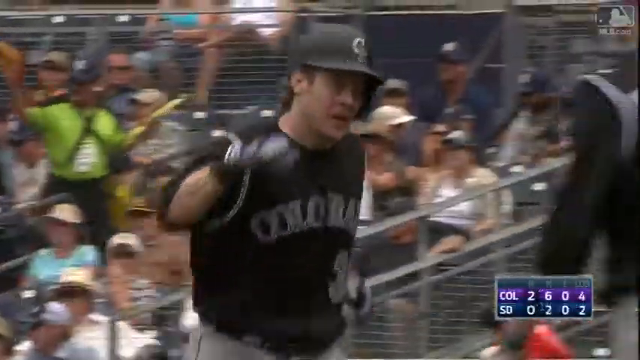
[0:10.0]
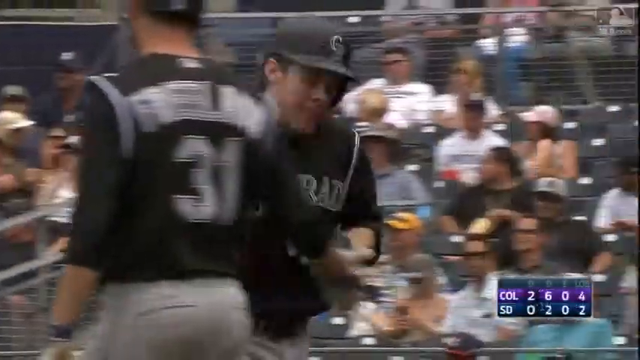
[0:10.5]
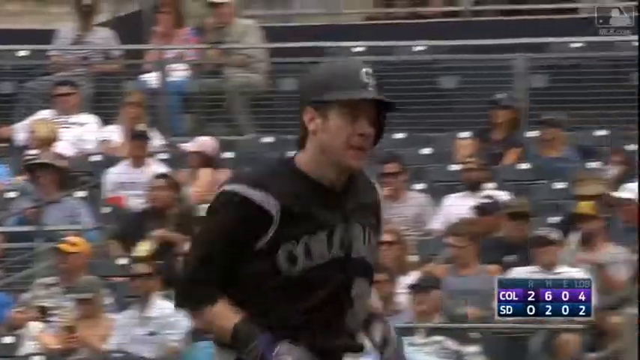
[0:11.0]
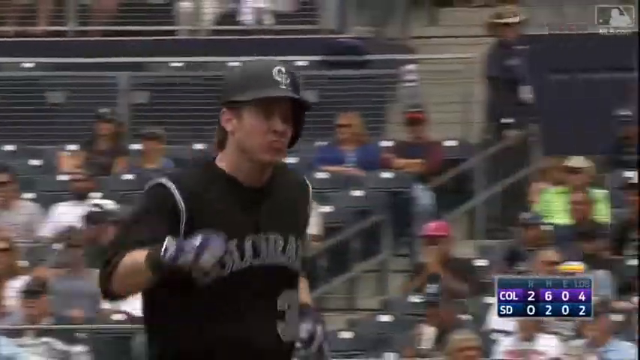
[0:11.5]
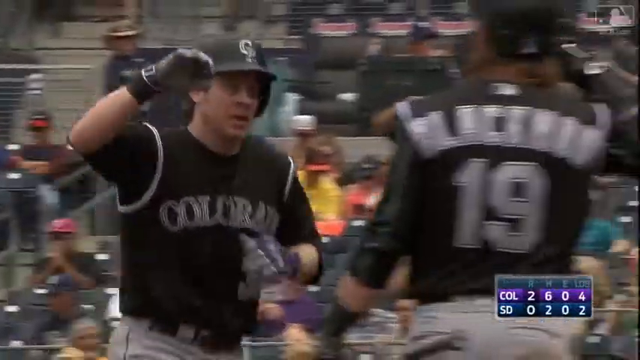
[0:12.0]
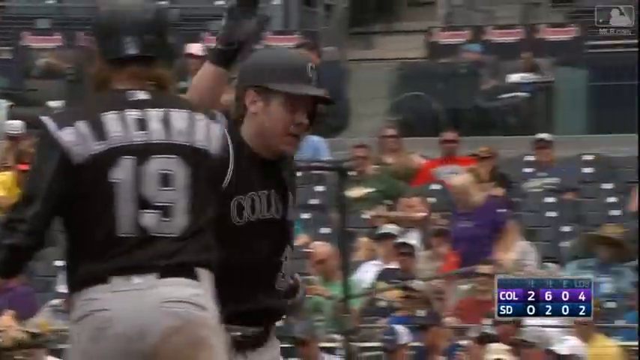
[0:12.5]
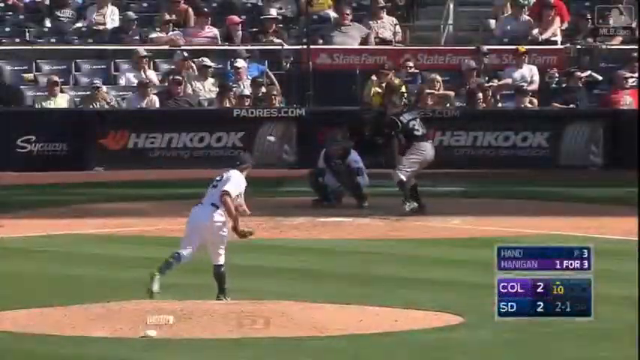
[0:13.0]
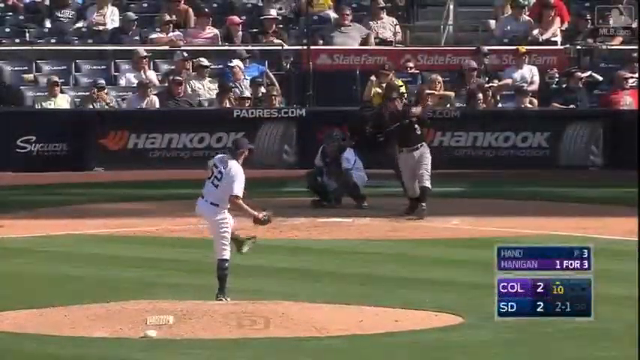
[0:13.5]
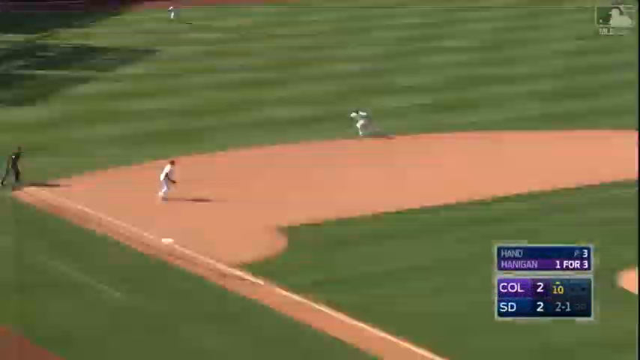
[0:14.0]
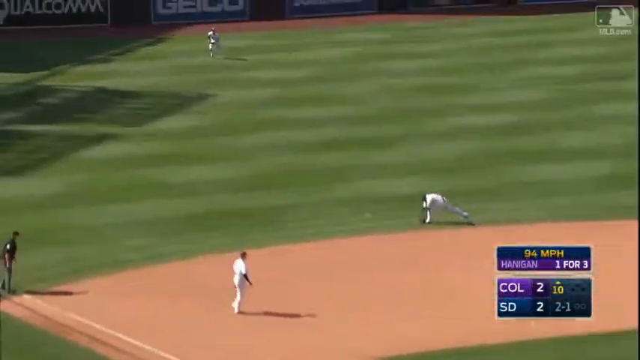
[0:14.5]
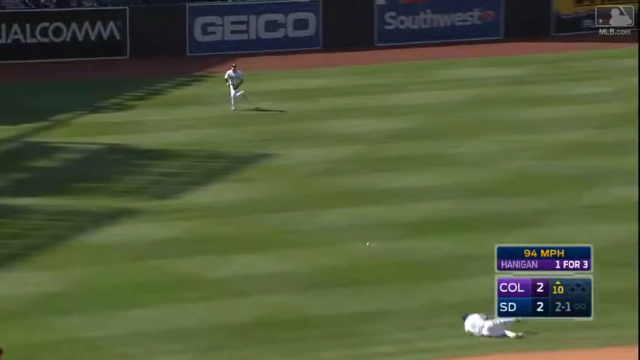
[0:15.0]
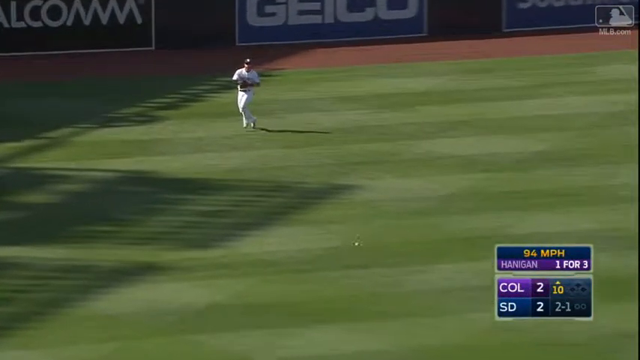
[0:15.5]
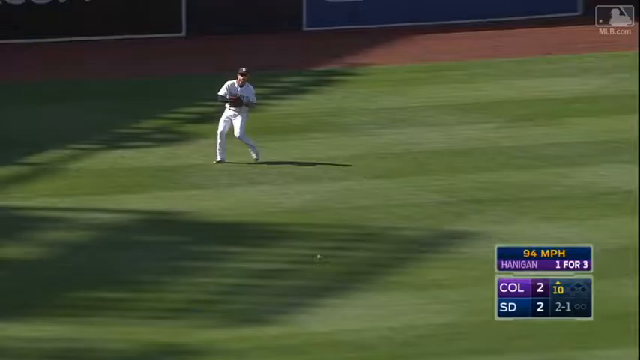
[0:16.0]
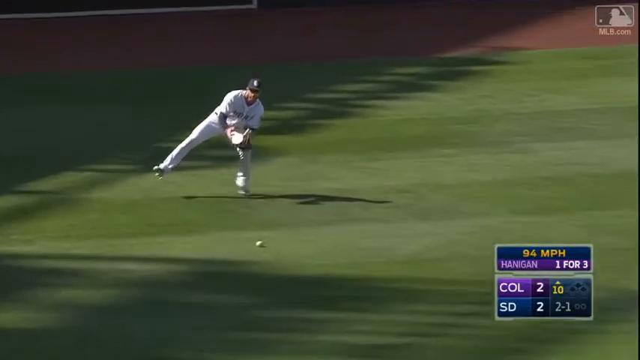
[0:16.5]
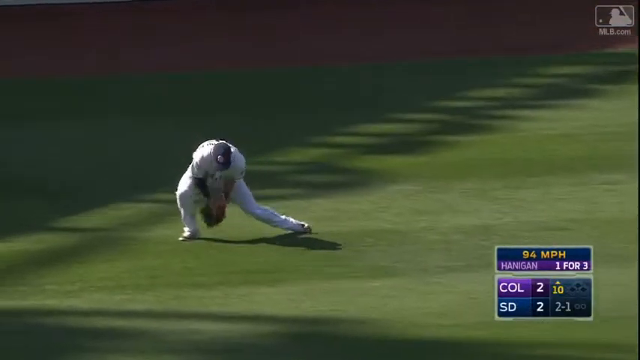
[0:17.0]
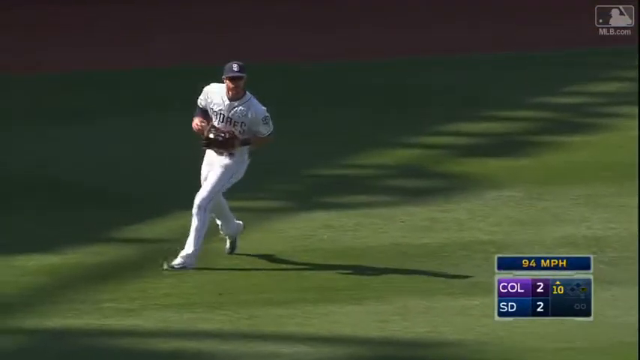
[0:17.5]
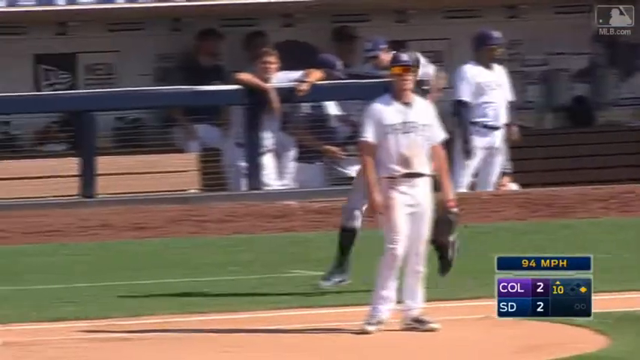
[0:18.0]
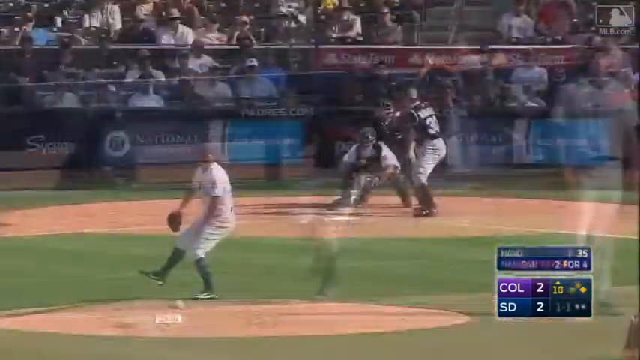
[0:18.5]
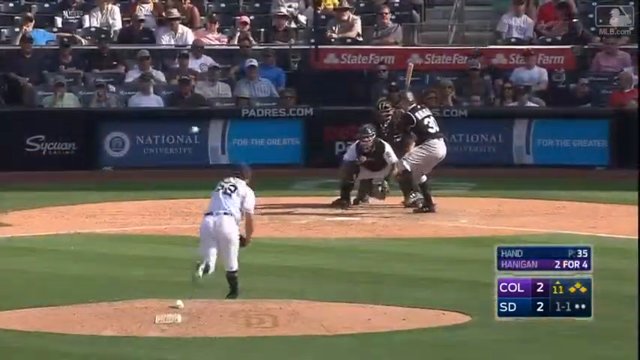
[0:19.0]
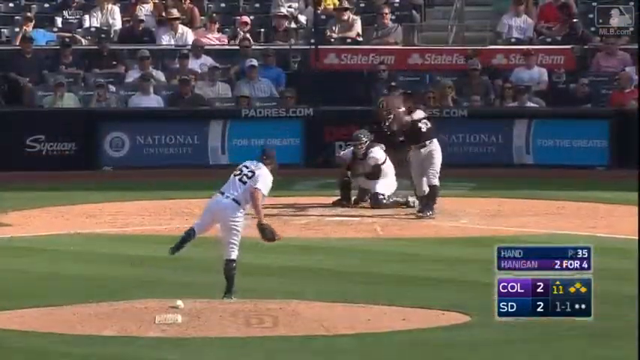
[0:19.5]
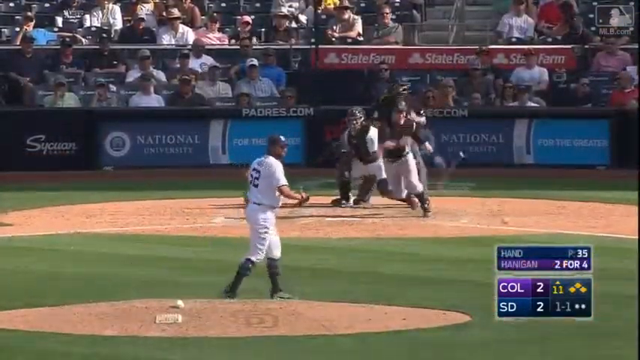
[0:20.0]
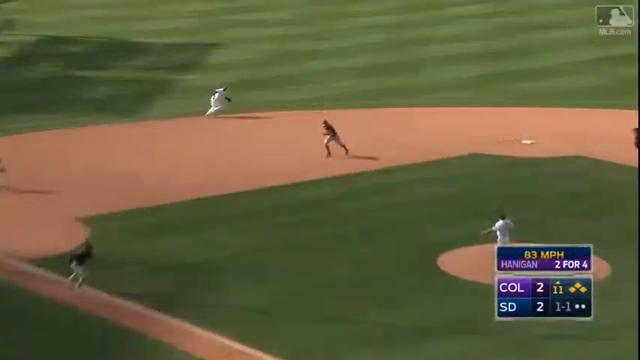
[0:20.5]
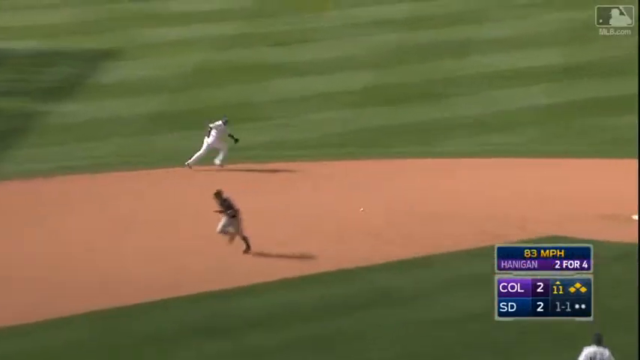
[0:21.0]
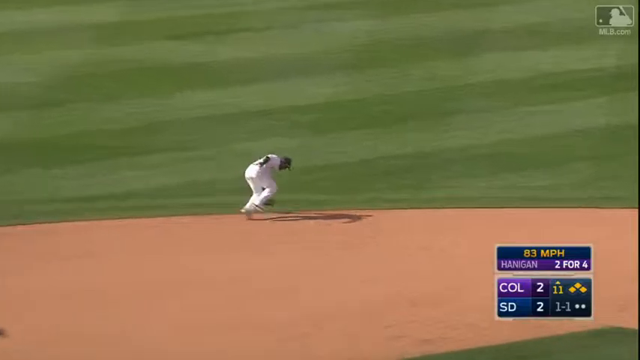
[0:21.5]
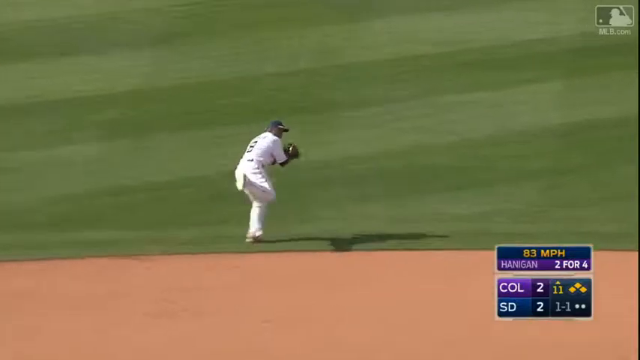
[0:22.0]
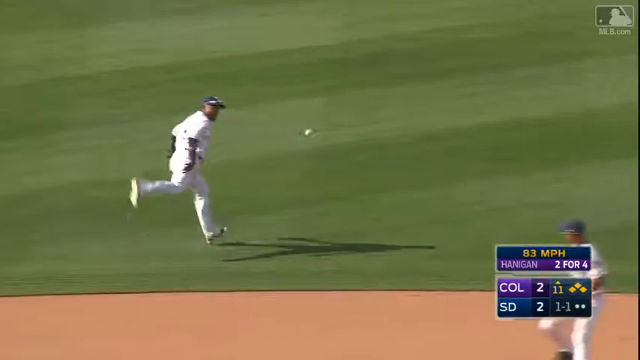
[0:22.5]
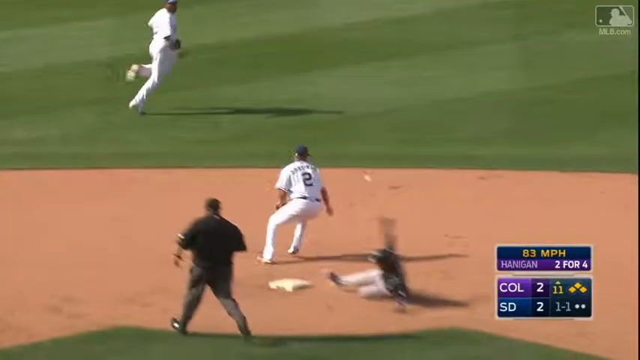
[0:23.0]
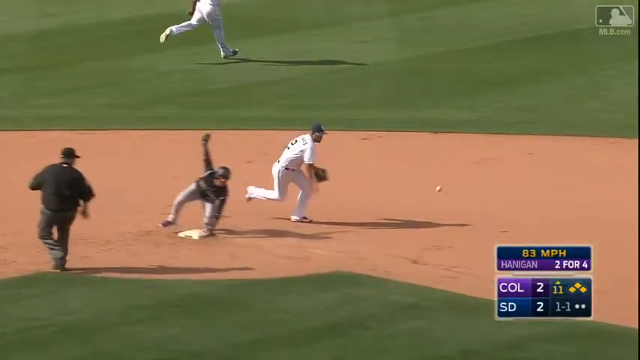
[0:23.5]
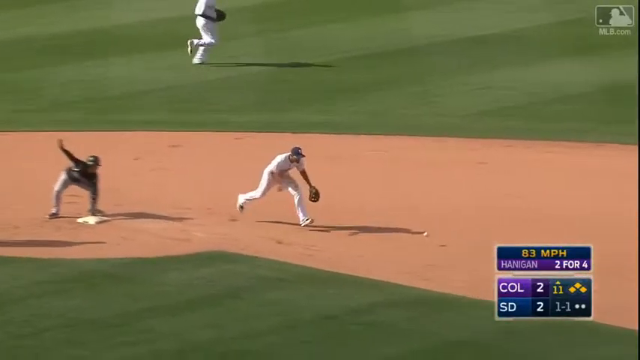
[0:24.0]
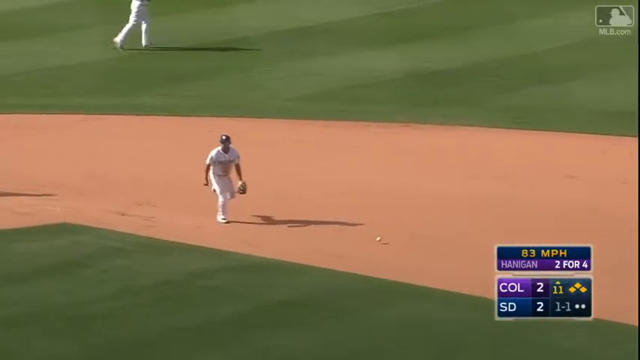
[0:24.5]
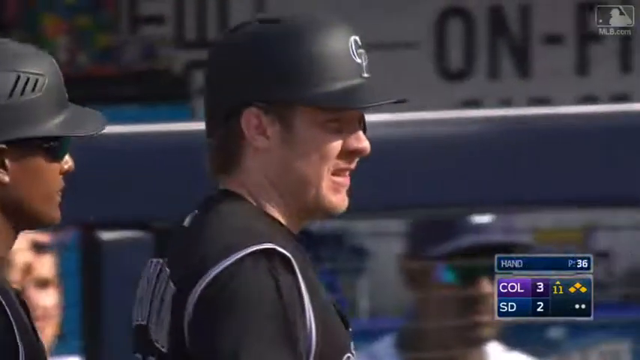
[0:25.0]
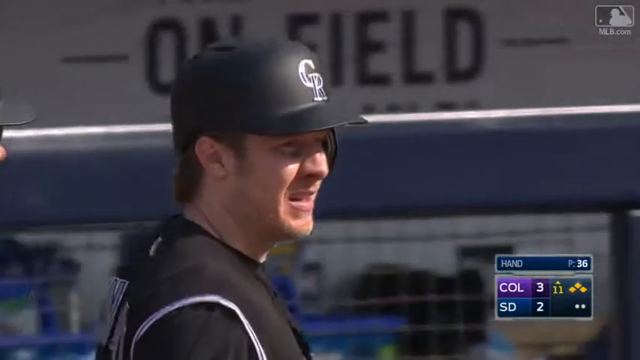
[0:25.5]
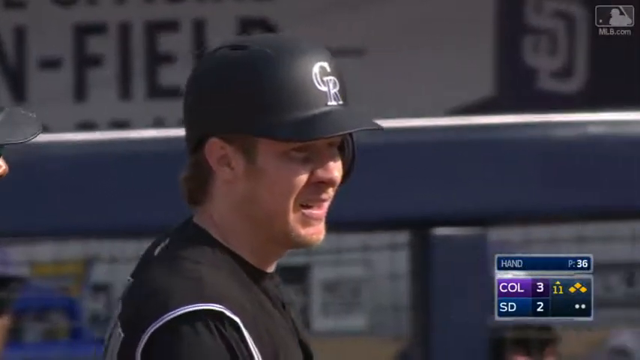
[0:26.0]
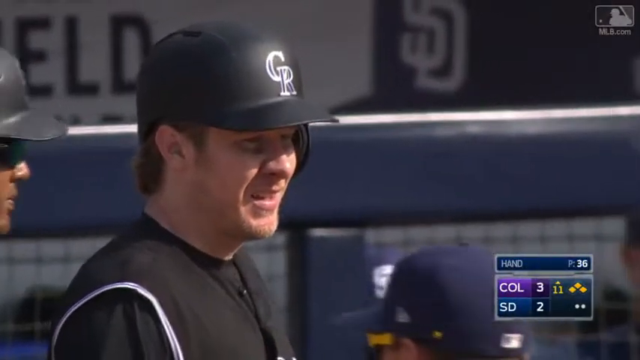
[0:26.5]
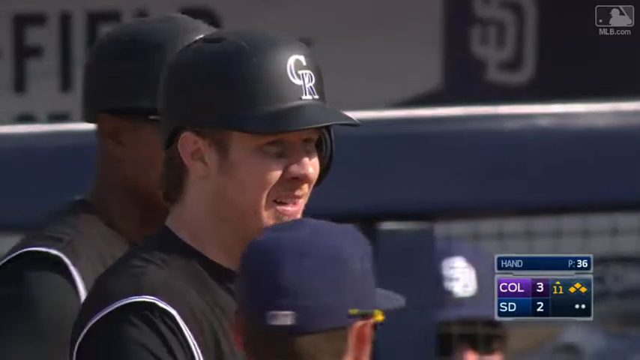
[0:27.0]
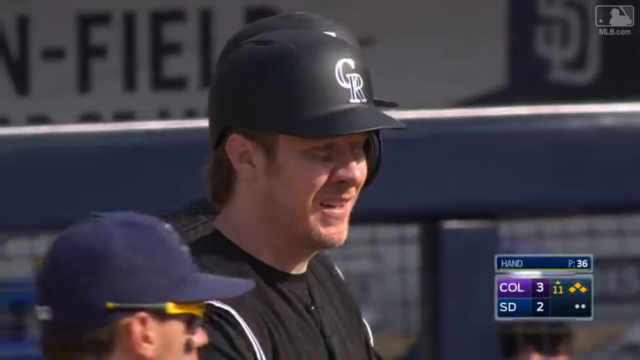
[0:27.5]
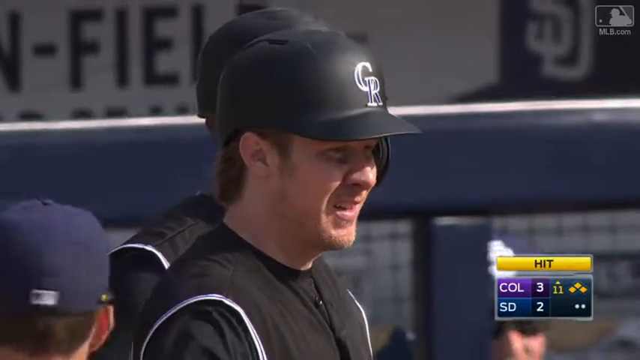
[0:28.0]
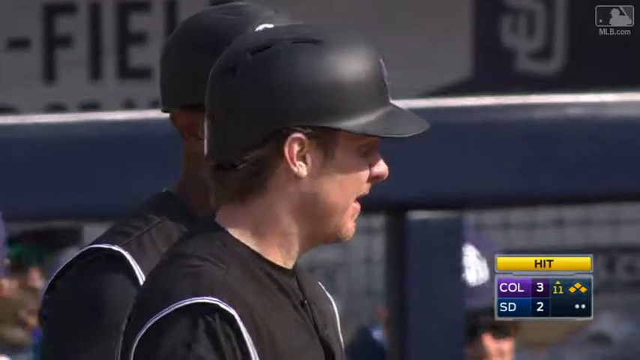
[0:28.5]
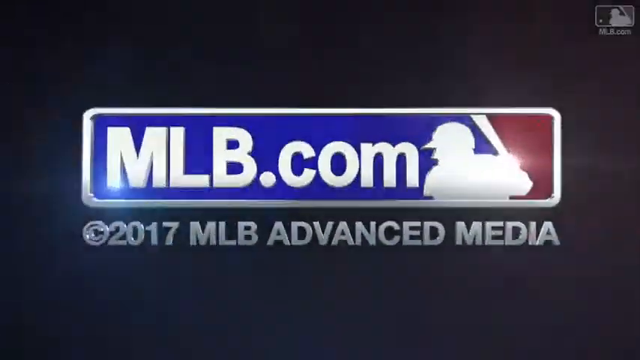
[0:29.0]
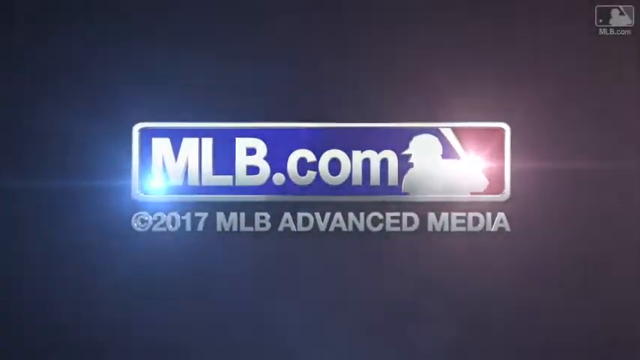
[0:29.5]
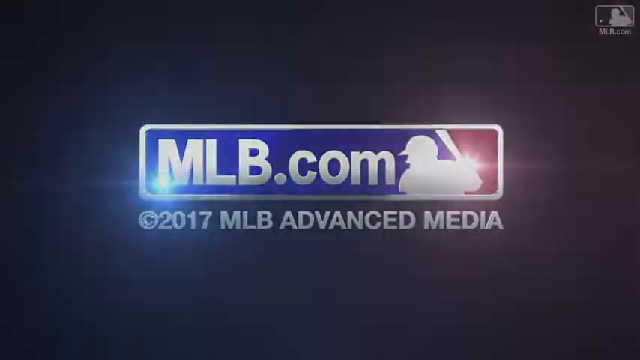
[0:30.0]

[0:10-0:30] The player who just hit the home run walks in to people clapping their hands. Next, in the bottom of the tenth, the game is tied 2-2 with a count of one or two balls and one strike. He hits a 94-mile-per-hour ball, which gets past the shortstop and goes into left field for a hit. Then, in the top of the 11th, it is still tied 2-2 with the bases loaded and two outs. He hits a slow grounder to the shortstop, who has to run to get it and does get it, but his toss to the second baseman to get the out is off the mark. Everybody is safe, and Colorado takes the lead 3-2. The game is from 2017.